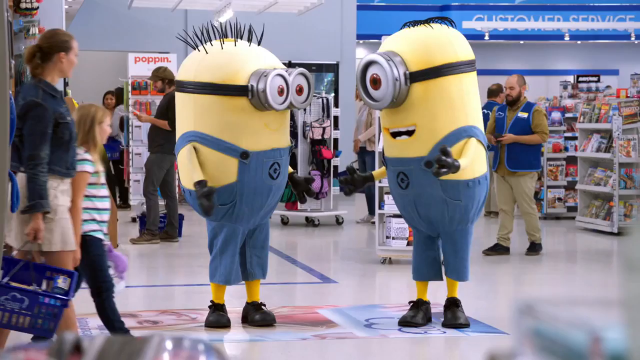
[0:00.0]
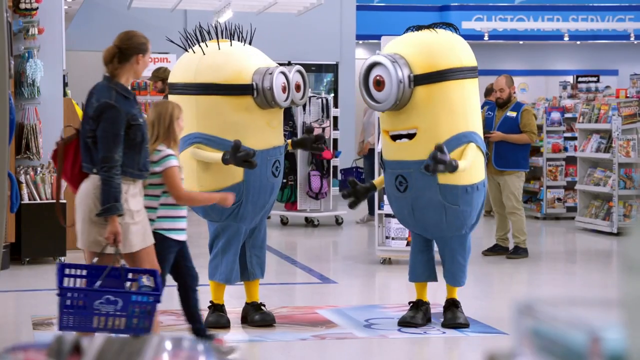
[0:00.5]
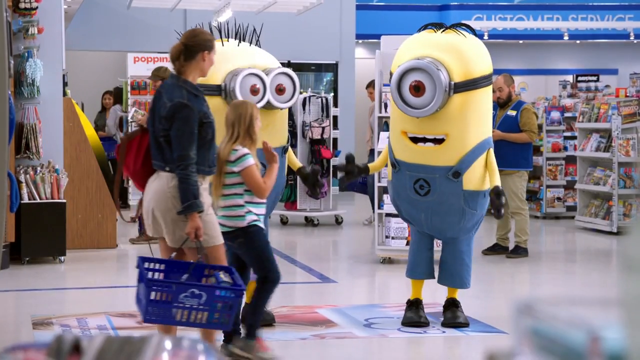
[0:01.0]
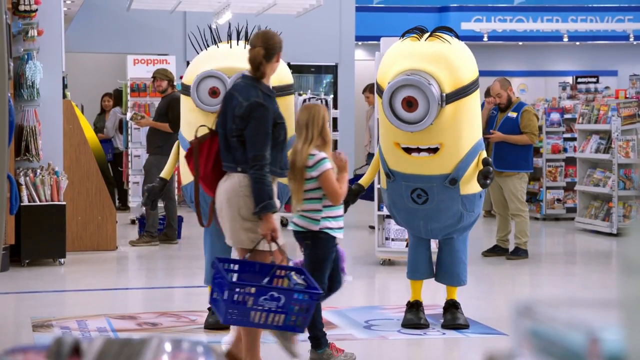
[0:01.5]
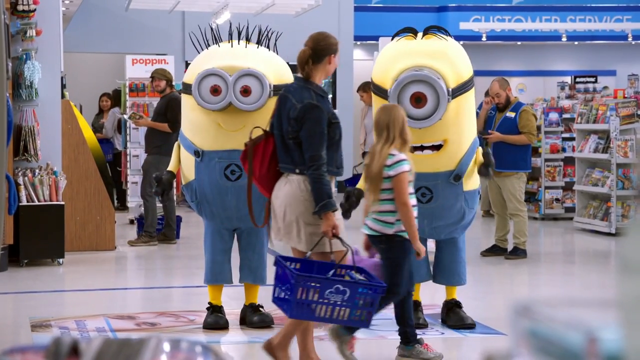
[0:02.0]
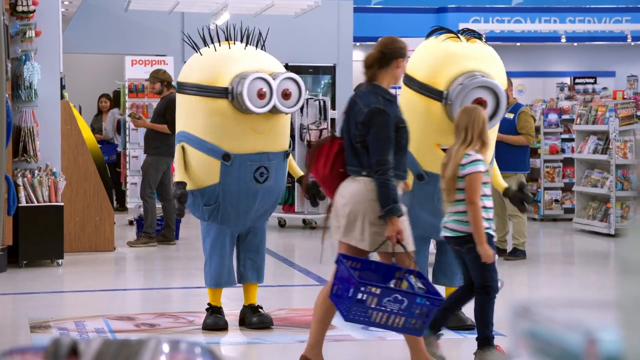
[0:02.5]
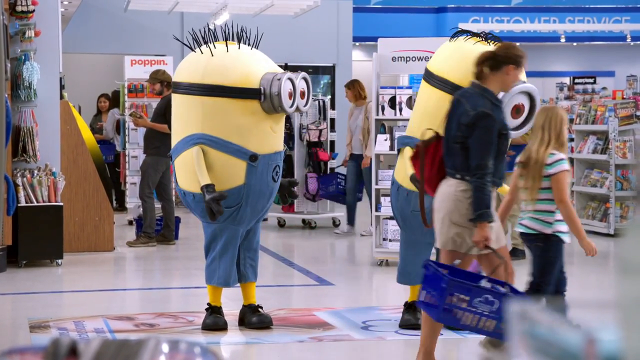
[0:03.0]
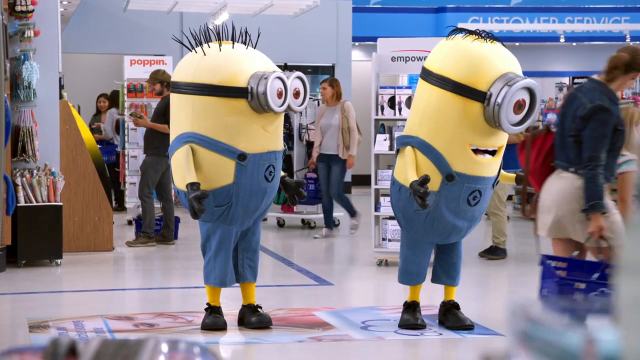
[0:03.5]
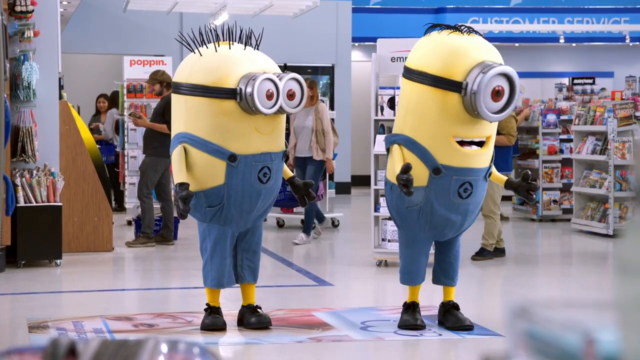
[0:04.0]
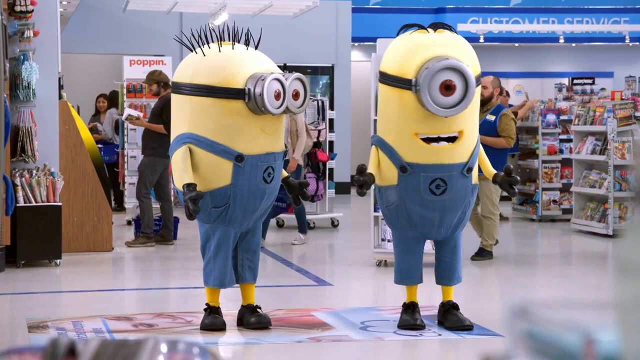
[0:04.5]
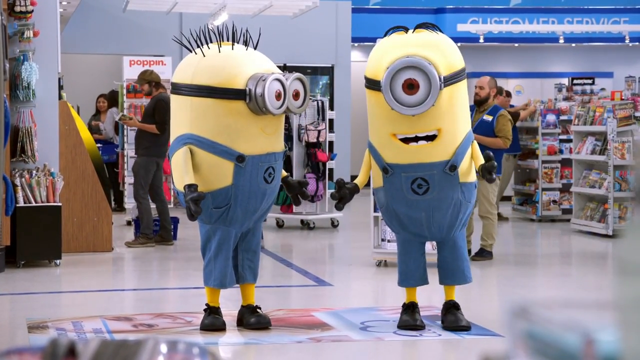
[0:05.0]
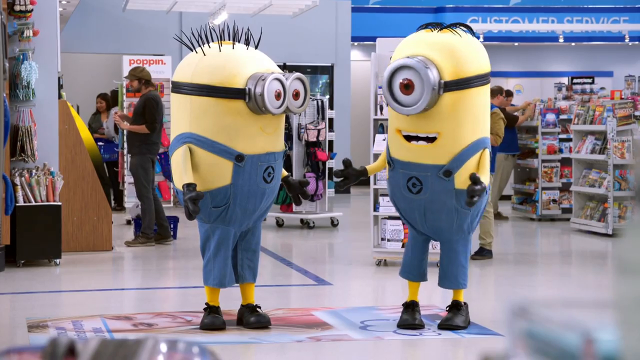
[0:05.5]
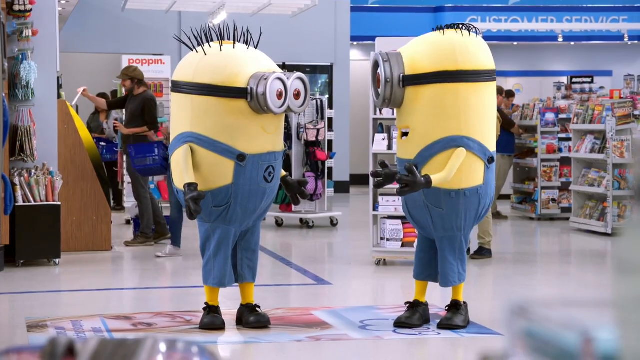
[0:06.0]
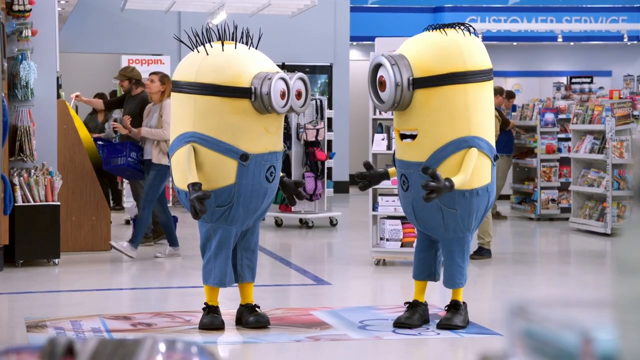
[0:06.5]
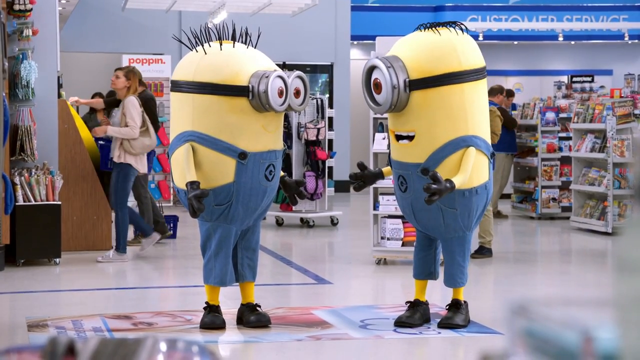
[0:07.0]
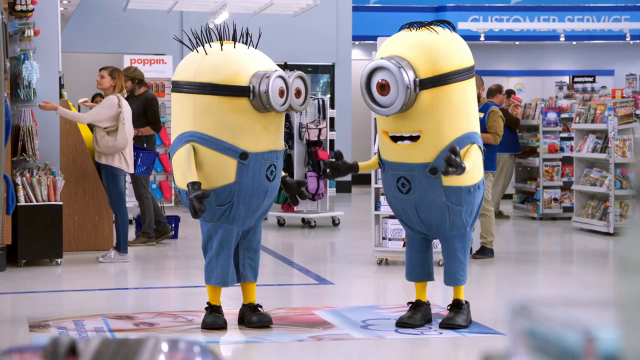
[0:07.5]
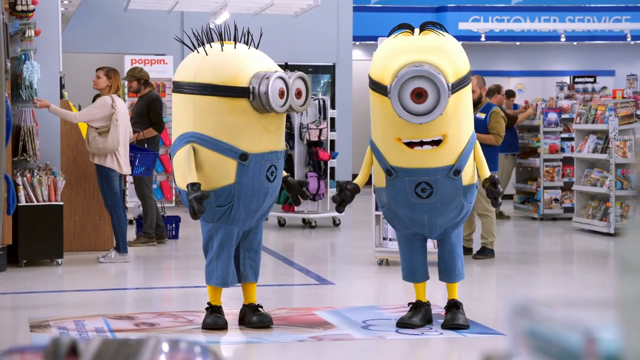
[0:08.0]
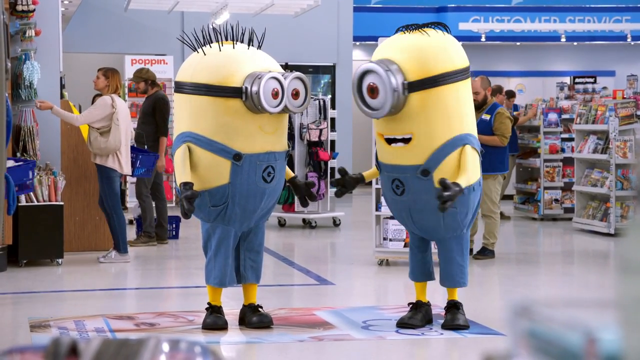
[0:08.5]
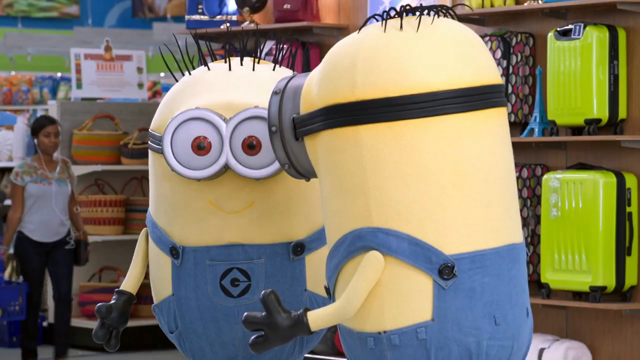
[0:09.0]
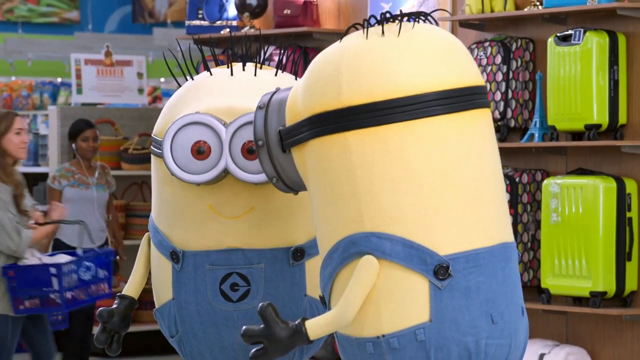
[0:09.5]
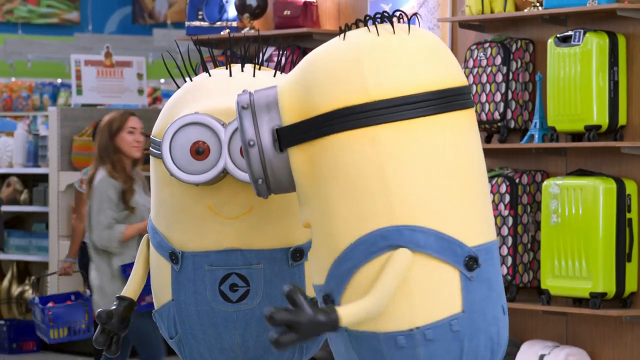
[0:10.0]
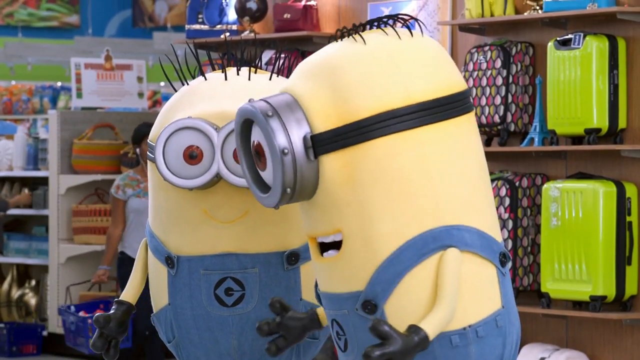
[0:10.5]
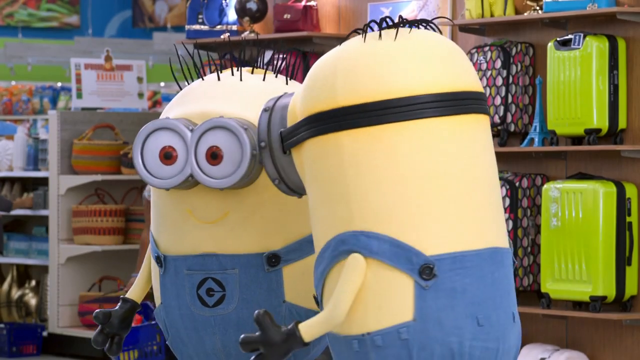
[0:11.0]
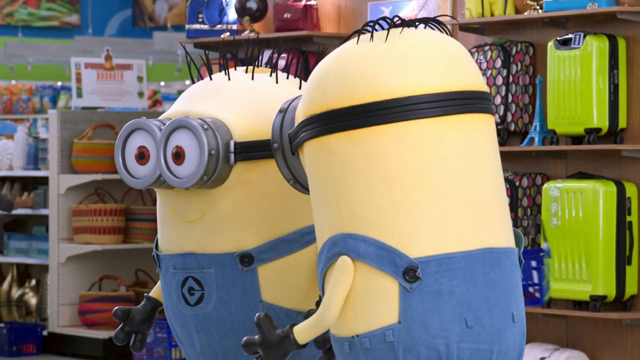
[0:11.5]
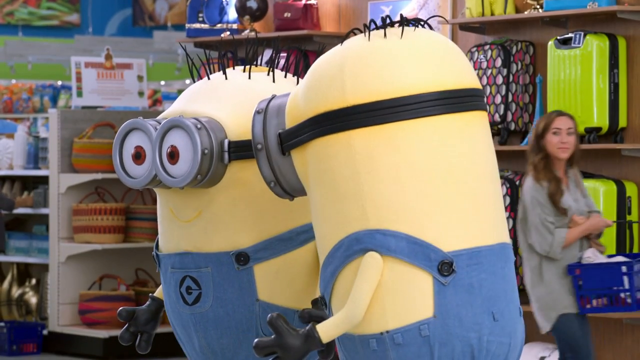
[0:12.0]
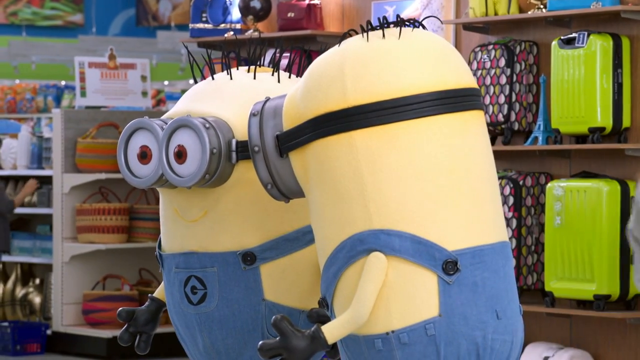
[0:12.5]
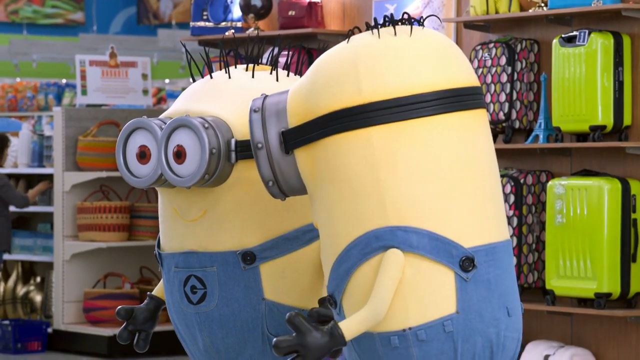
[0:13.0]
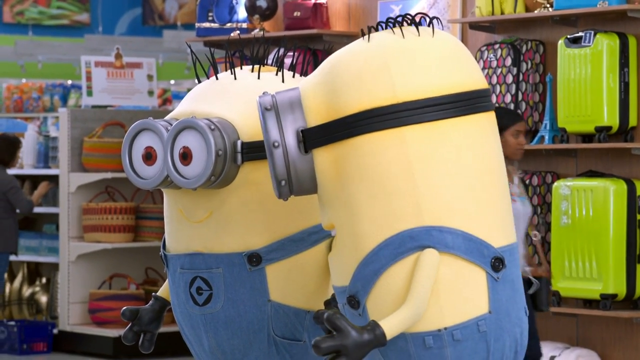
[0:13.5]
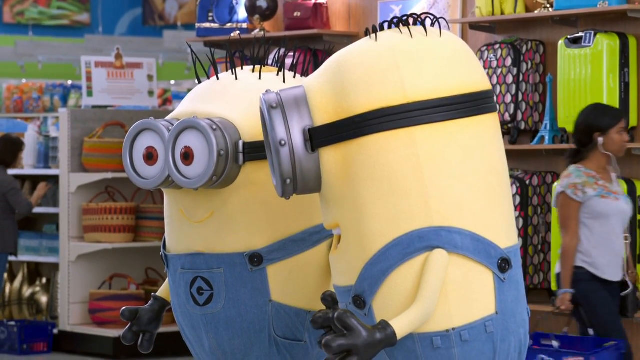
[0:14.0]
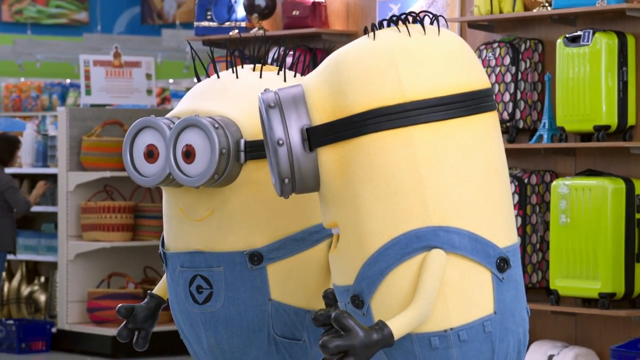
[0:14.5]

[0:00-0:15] The video appears to show the Minions in a superstore. One minion has one eye and wears his overalls, and another minion with two eyes also wears his overalls. They are in the middle of the store as shoppers walk past, and more shoppers are in the background of the store behind the minions. Suitcases are on a shelf behind them, and the minions appear to be talking to the shoppers who walk past. The shoppers carry blue baskets for their items, and store workers in blue vests are behind them. It is not apparent which store it is, but behind them there is also a customer service section with a blue strip across the wall that says "customer service." Woven baskets are on a shelf in the store, and there is a display that says "poppin."